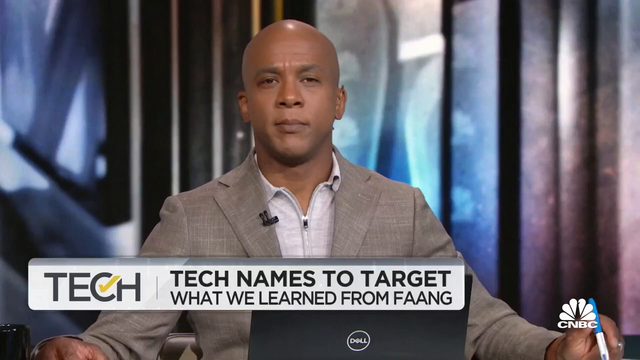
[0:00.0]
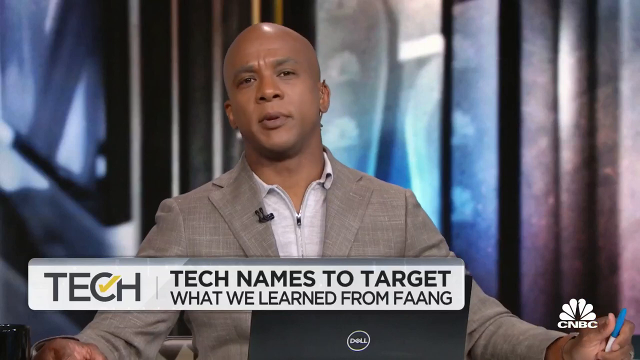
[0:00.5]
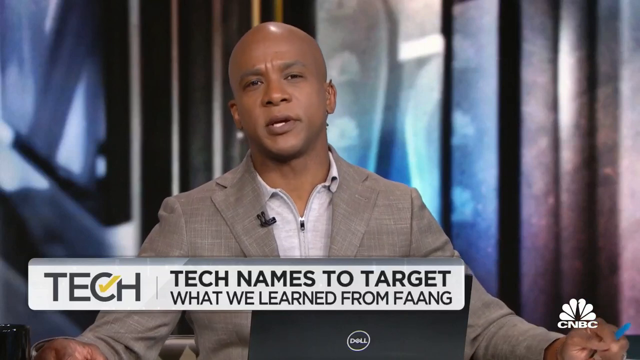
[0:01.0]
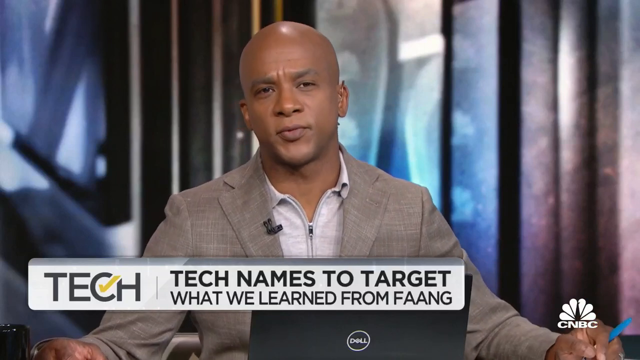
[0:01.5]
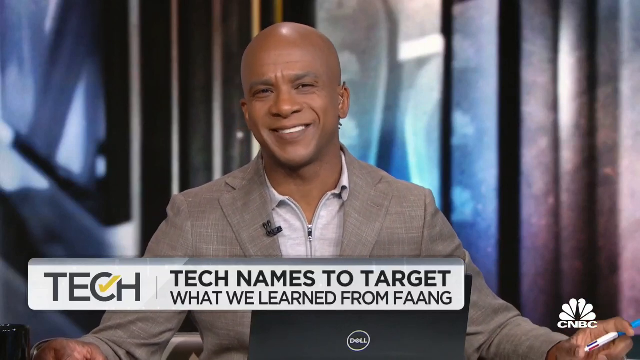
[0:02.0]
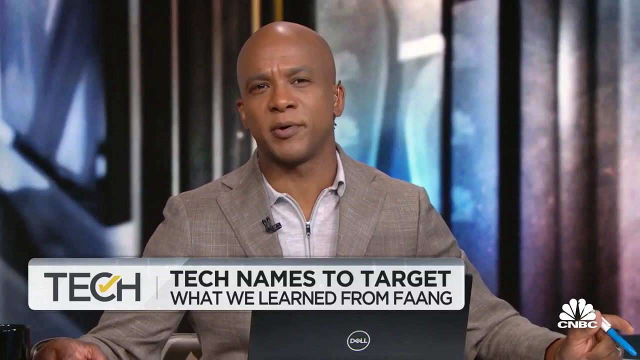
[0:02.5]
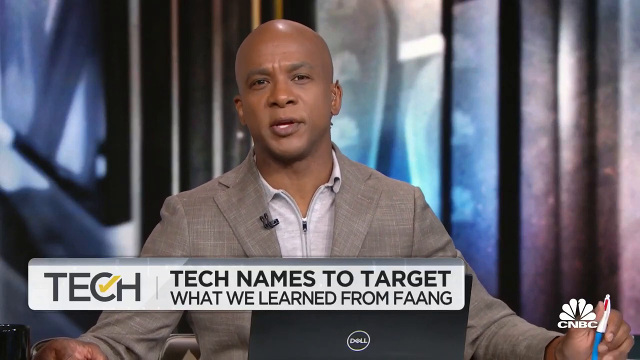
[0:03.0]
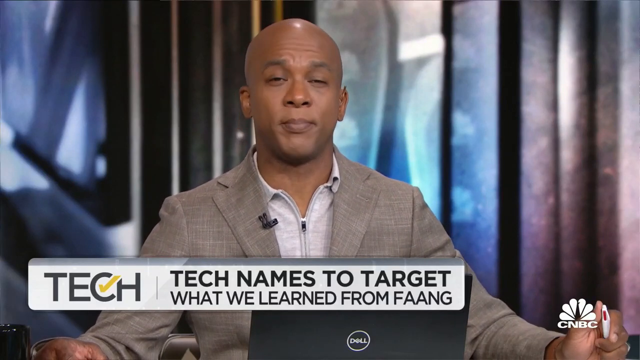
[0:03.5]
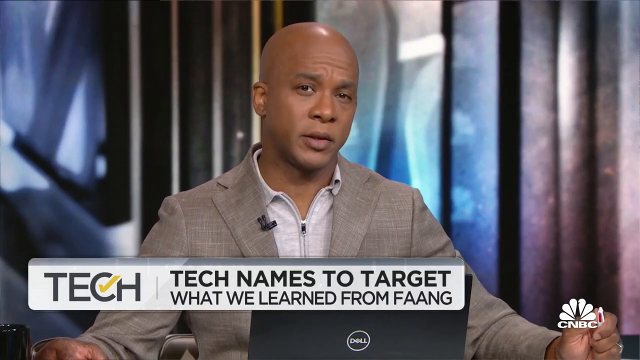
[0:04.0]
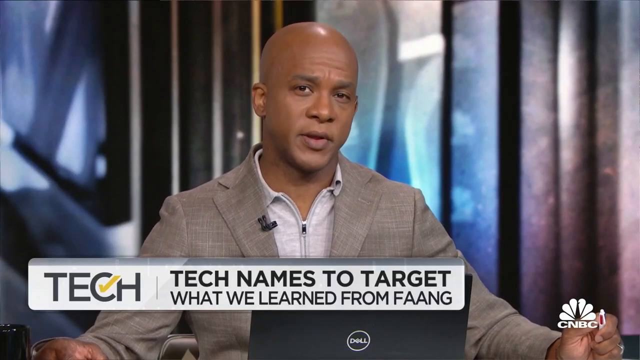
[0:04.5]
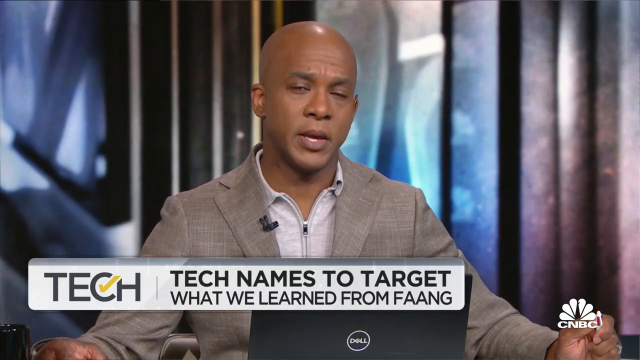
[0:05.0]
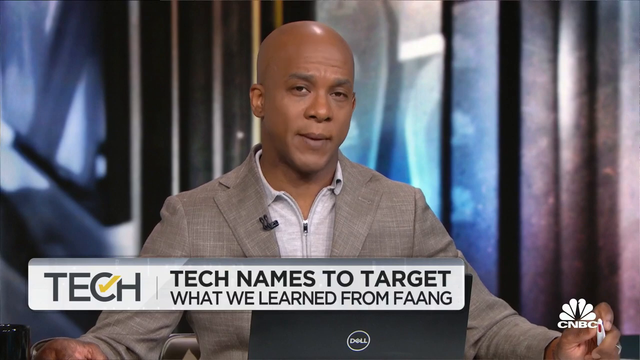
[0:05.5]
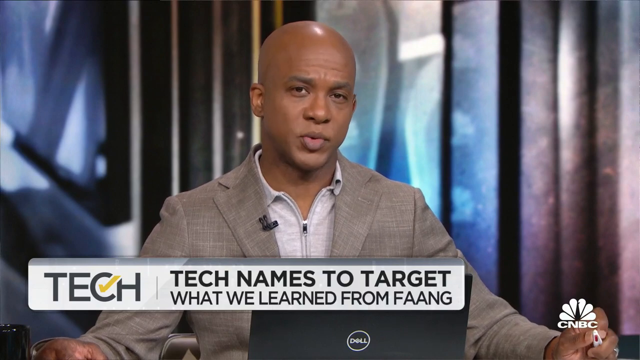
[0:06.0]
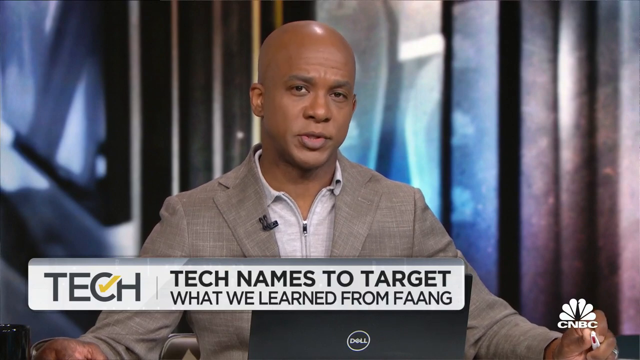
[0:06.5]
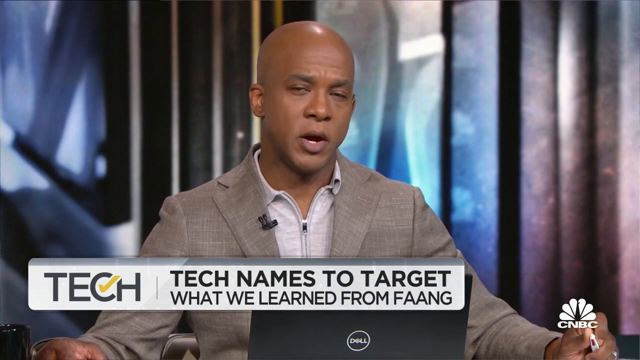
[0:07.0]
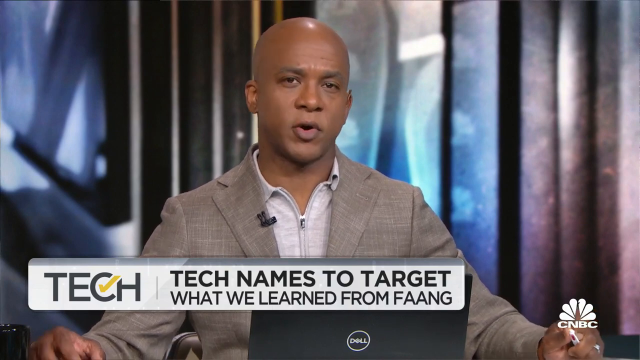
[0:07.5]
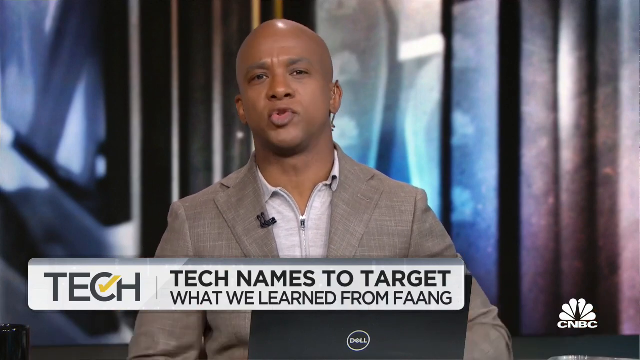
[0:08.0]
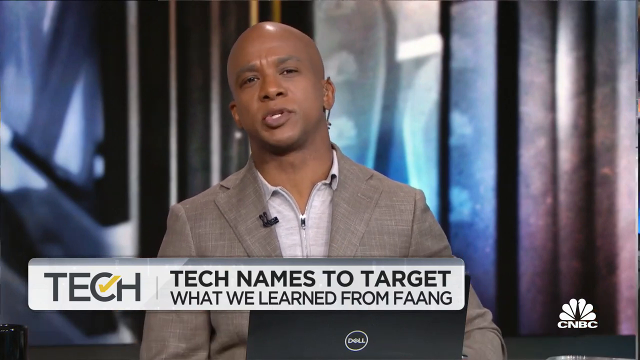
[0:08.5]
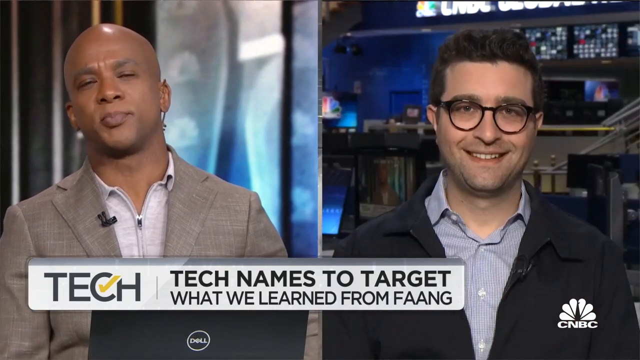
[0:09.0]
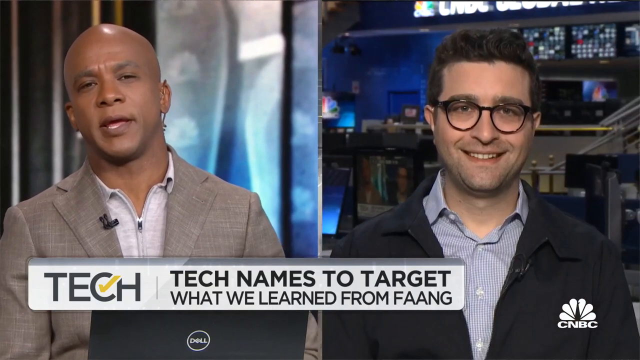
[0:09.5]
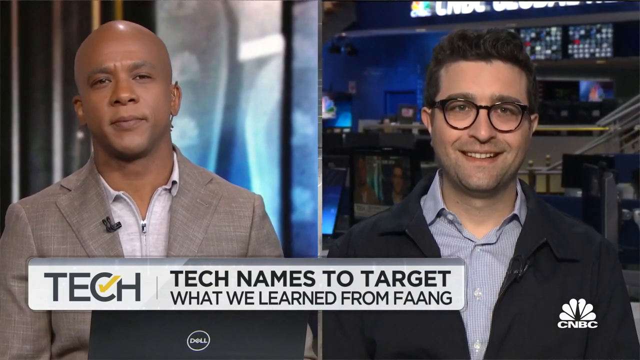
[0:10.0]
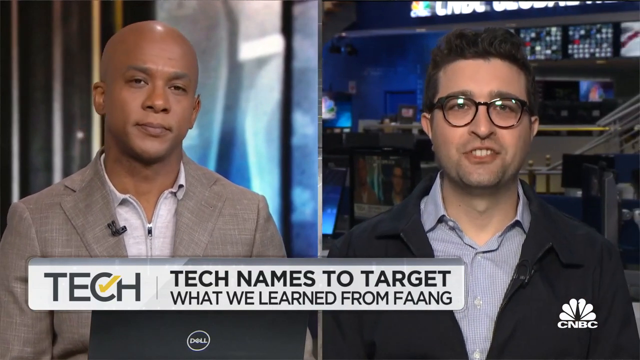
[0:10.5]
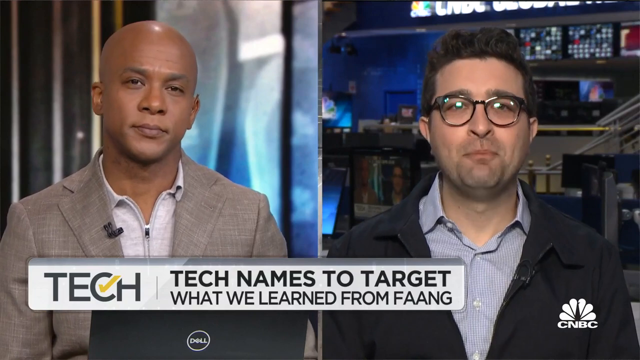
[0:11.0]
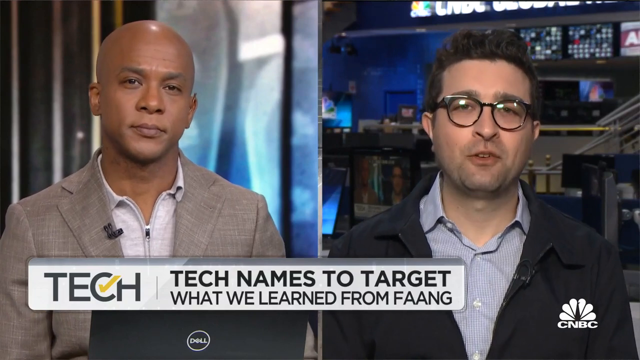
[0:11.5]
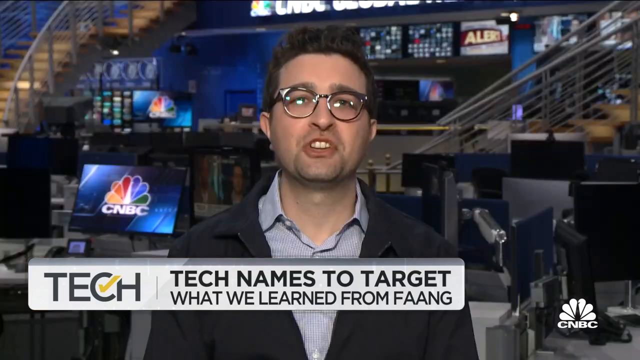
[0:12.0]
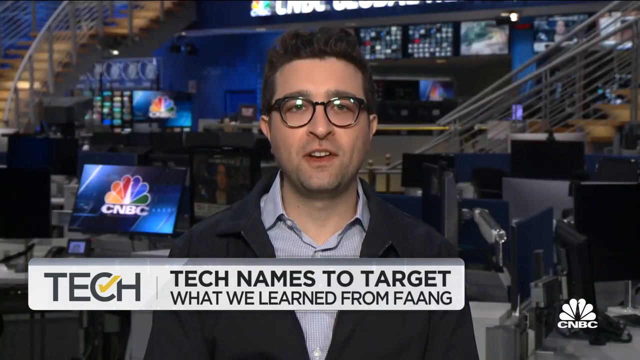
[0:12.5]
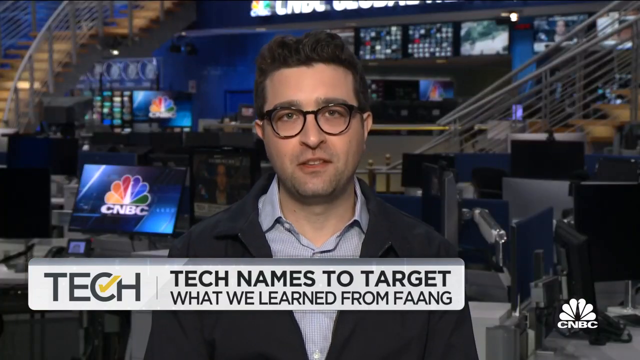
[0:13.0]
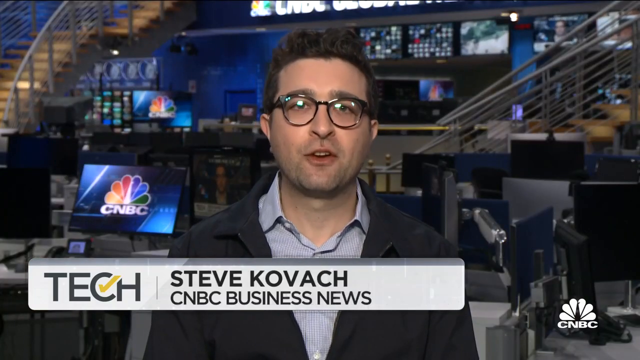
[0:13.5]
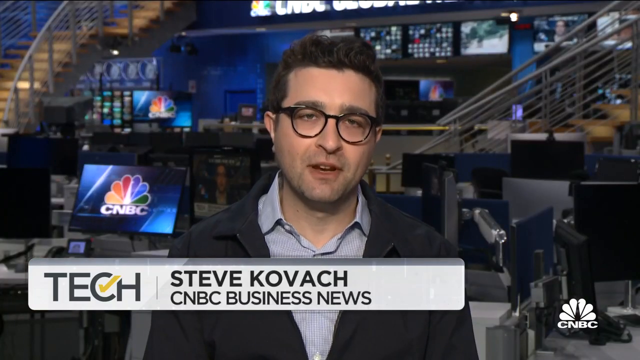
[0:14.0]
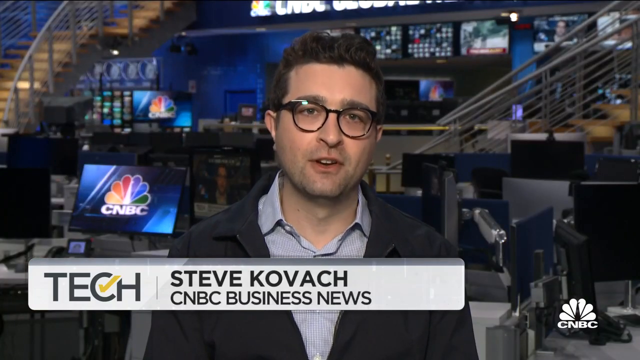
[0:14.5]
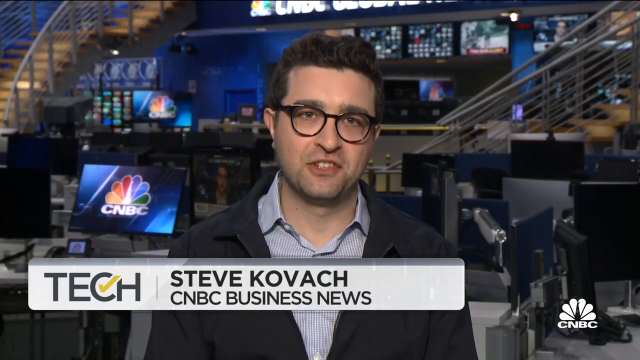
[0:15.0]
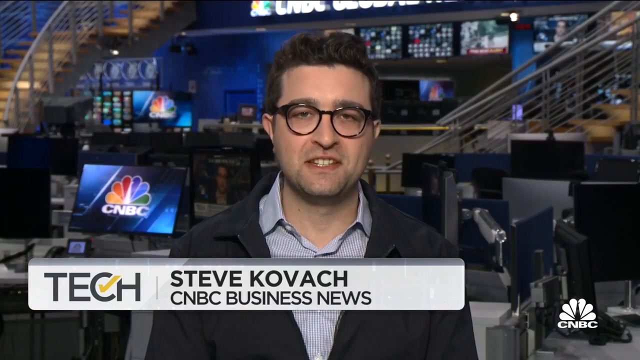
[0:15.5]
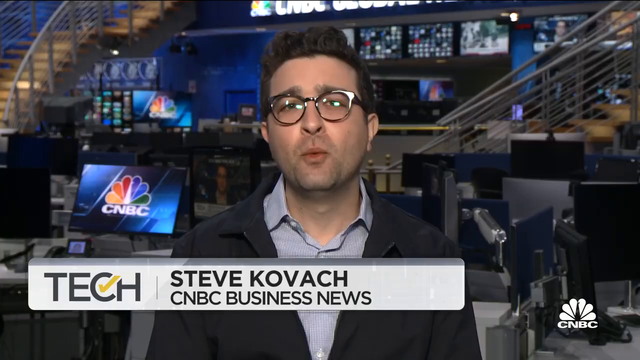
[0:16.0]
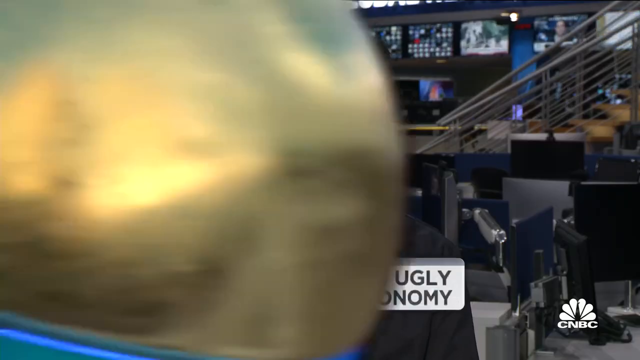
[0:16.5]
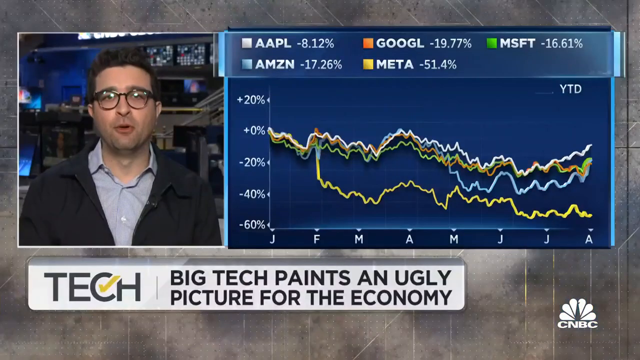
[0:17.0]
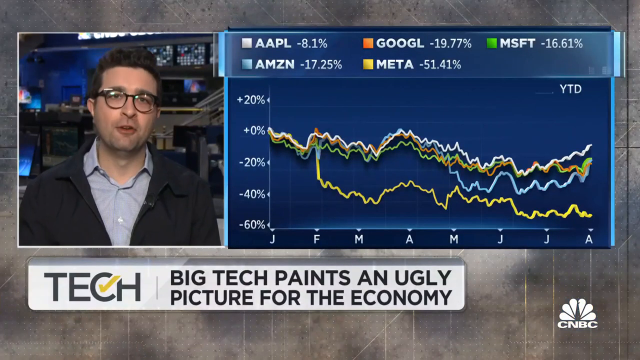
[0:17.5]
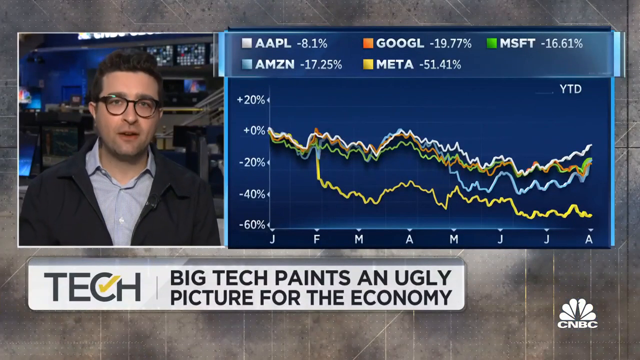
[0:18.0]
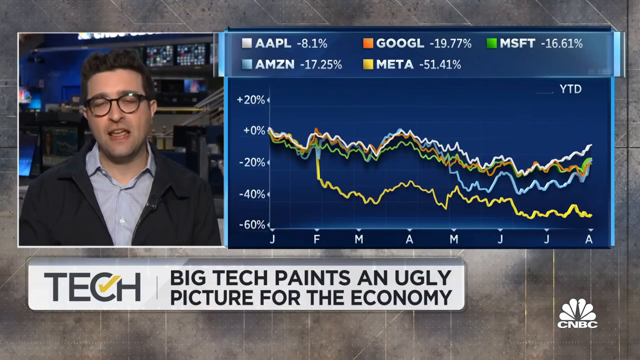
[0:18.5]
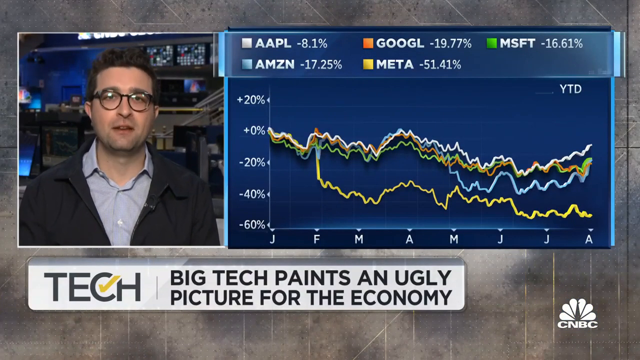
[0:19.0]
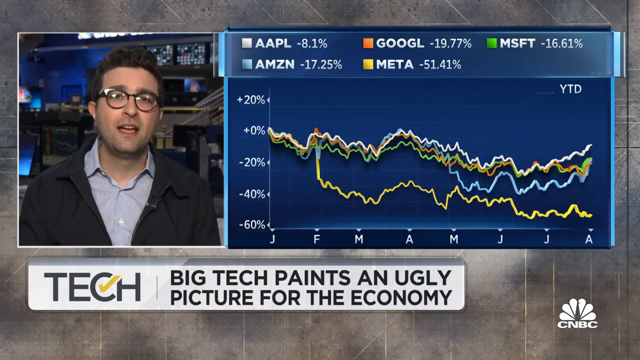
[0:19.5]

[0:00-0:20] This is a news story on CNBC. A bald African American male correspondent wears a tan blazer over a white shirt, with a small microphone attached to his blazer. The story he is reporting on is Tech Names to Target What We Learned from FAANG. A Dell laptop computer is directly in front of him as he reports, and there is also a coffee mug near him. As the video progresses, a split screen appears, with the African American correspondent on the left-hand side and a Caucasian man on the right-hand side. The Caucasian man wears glasses, a black jacket, and a blue and white striped shirt. In the background behind him are a CNBC News sign and several displays.